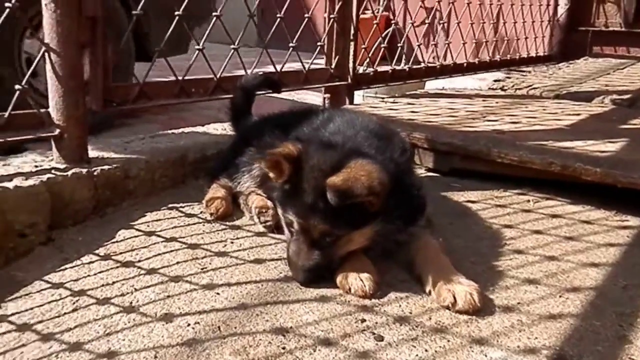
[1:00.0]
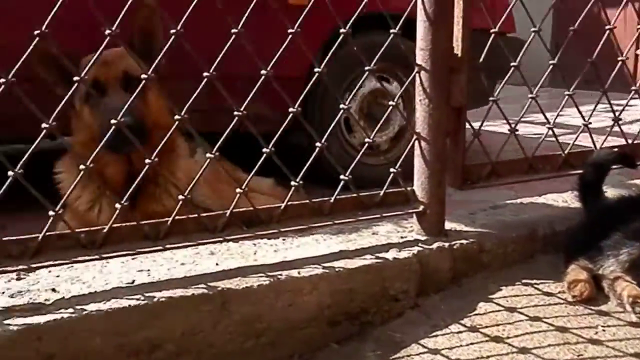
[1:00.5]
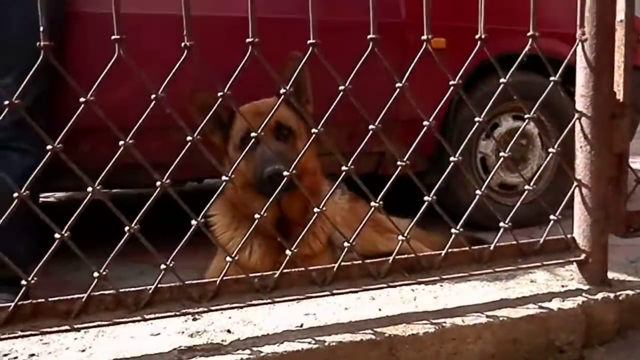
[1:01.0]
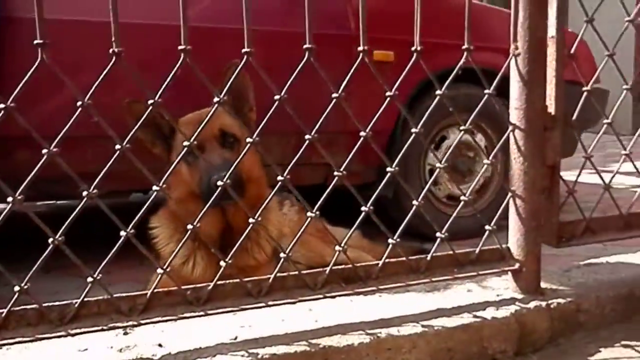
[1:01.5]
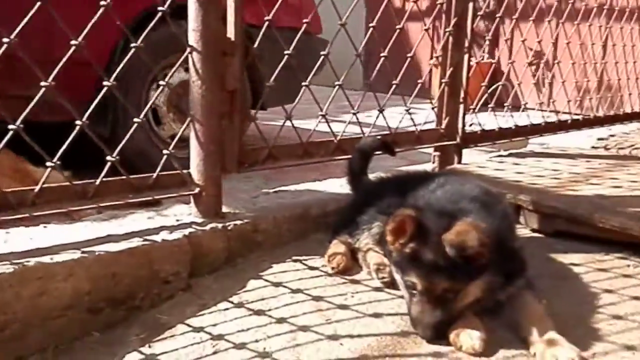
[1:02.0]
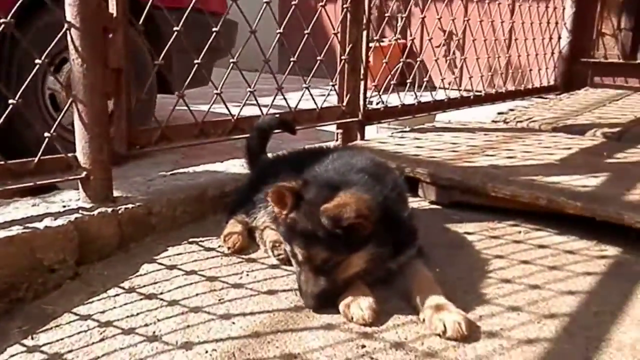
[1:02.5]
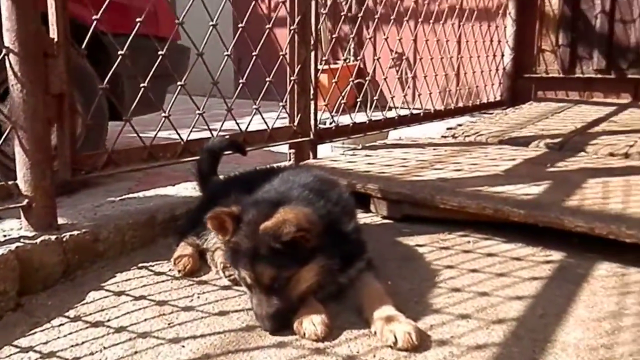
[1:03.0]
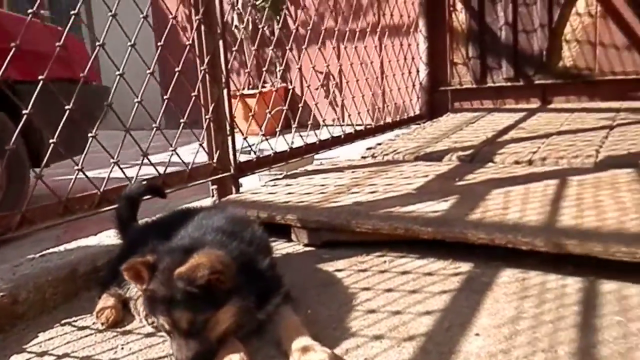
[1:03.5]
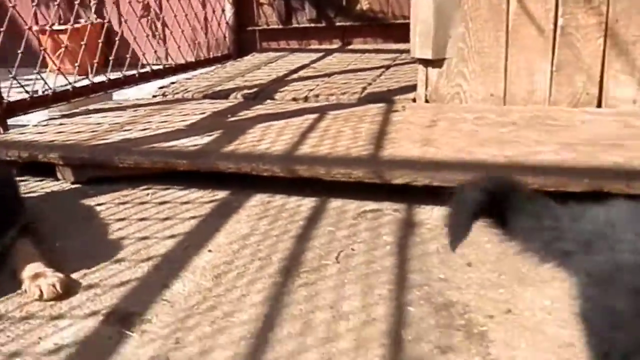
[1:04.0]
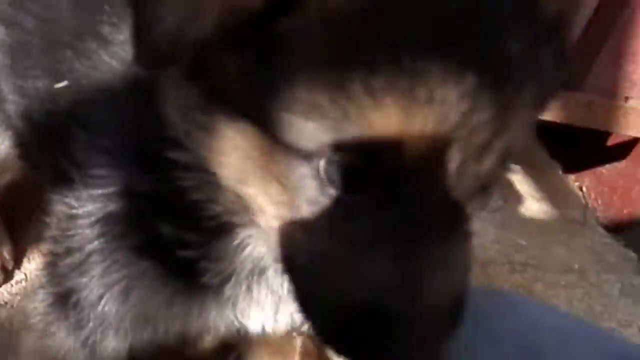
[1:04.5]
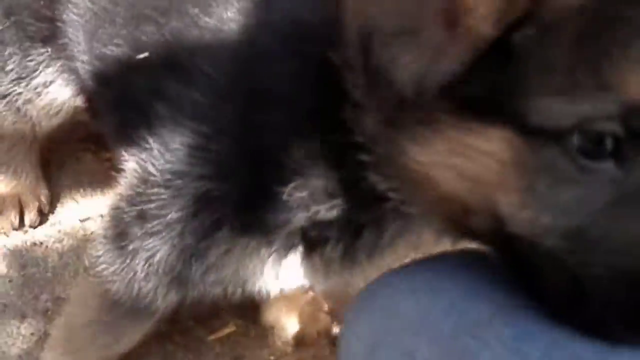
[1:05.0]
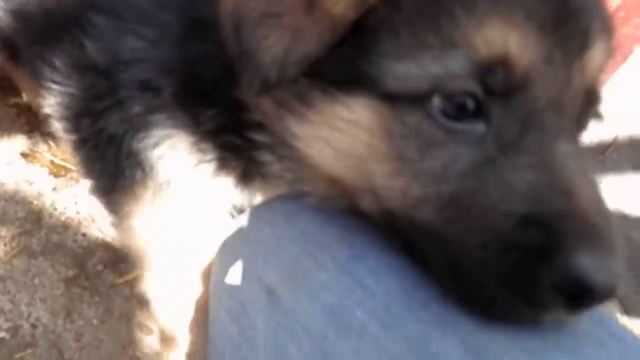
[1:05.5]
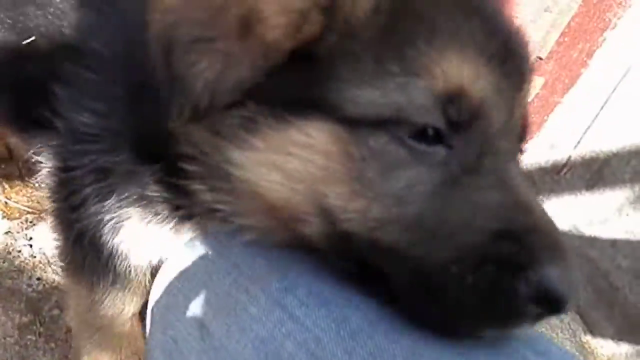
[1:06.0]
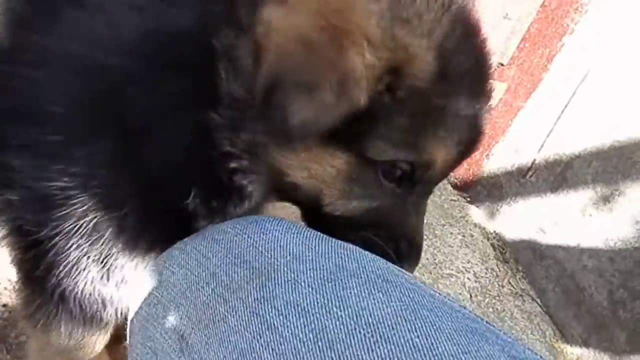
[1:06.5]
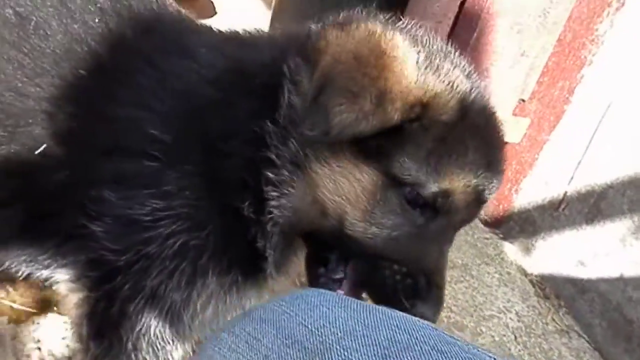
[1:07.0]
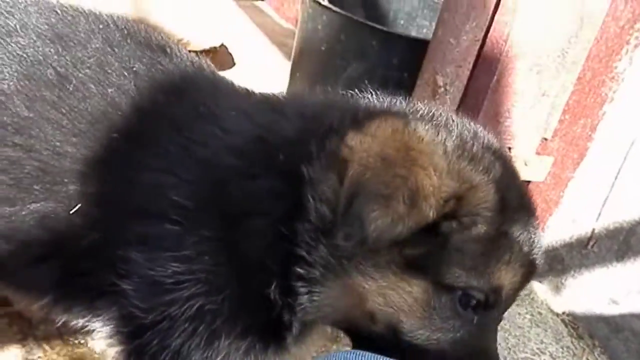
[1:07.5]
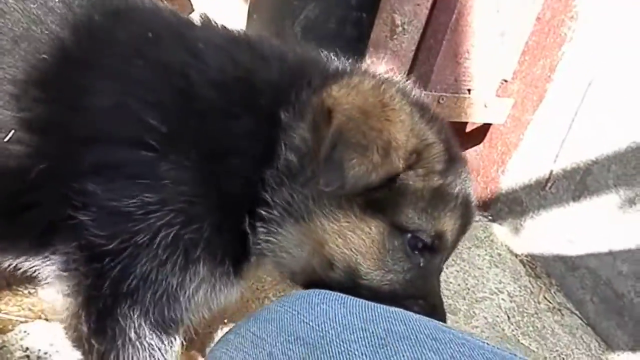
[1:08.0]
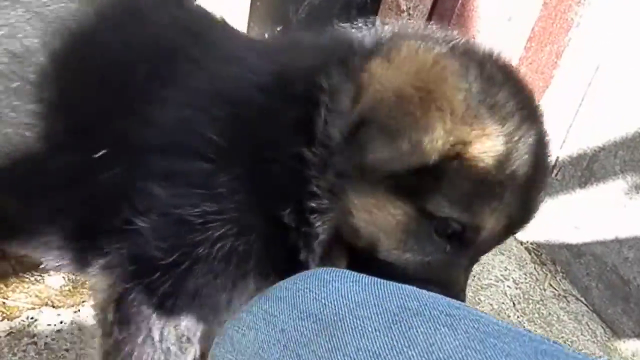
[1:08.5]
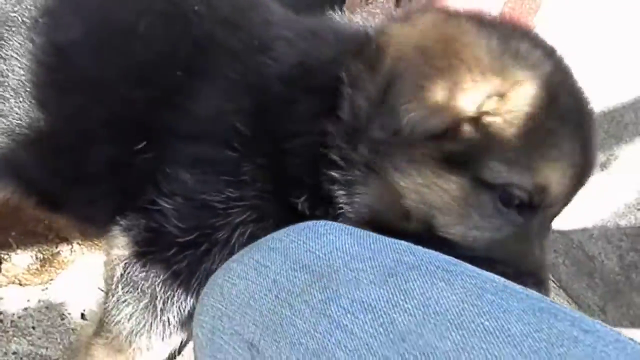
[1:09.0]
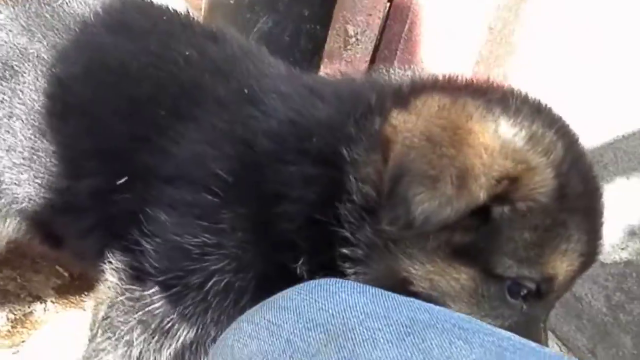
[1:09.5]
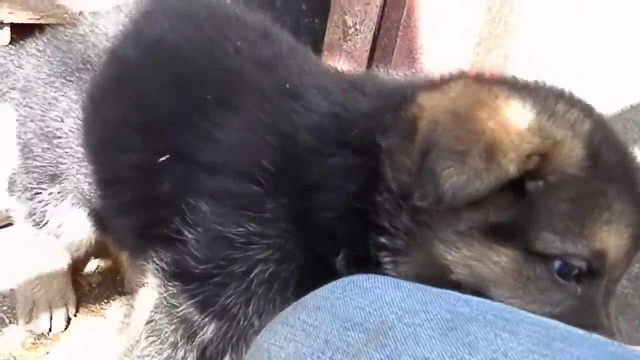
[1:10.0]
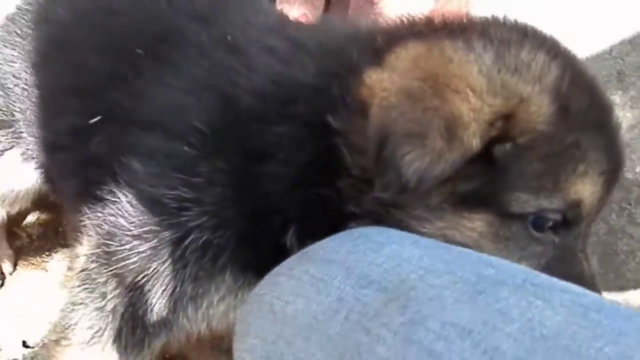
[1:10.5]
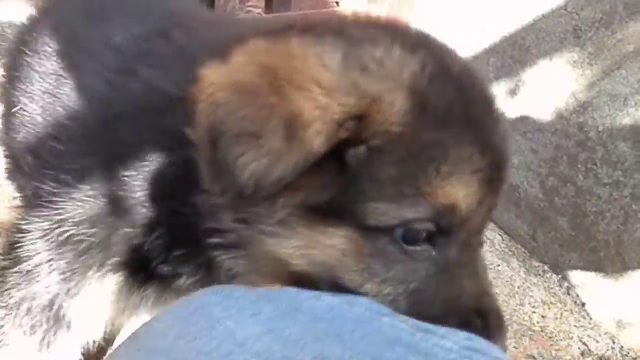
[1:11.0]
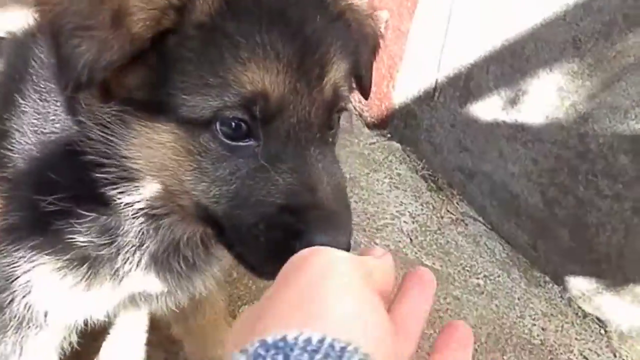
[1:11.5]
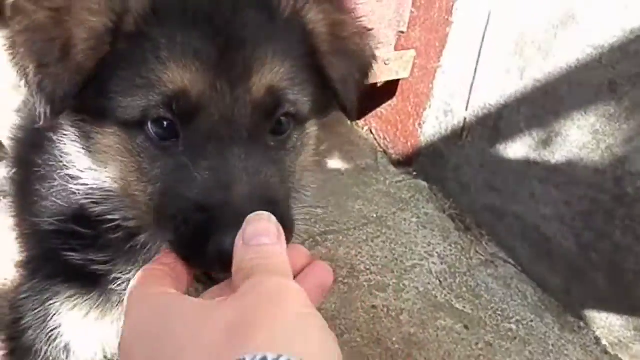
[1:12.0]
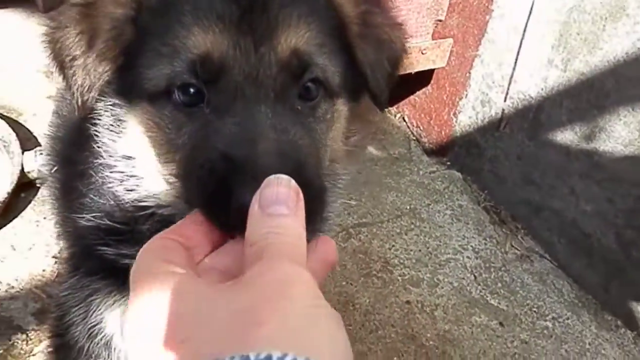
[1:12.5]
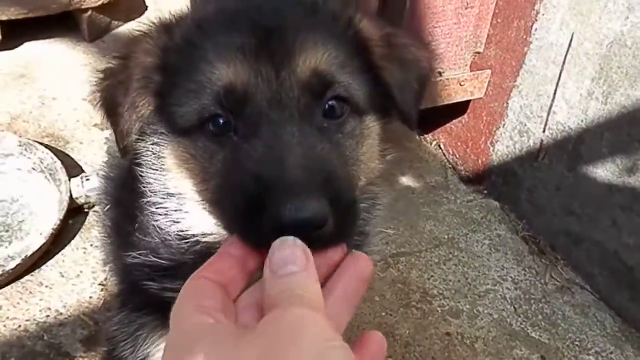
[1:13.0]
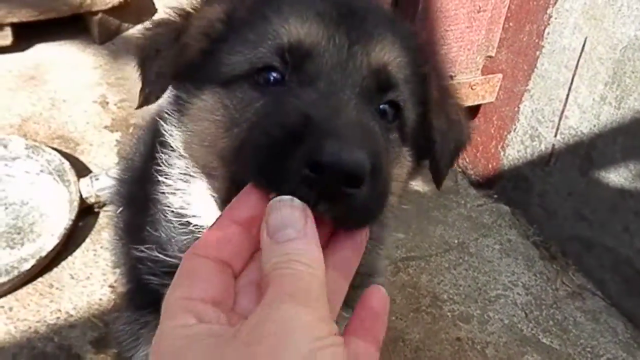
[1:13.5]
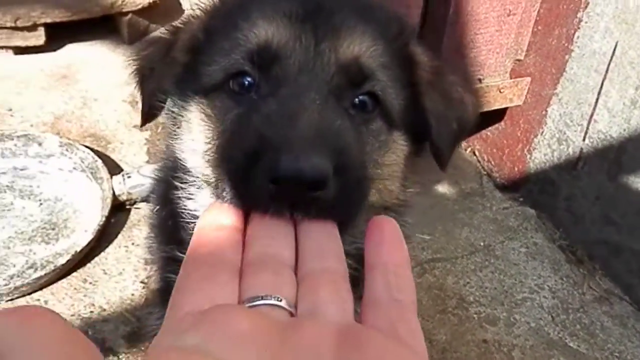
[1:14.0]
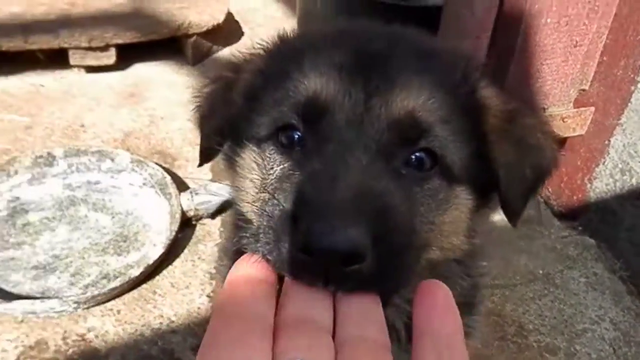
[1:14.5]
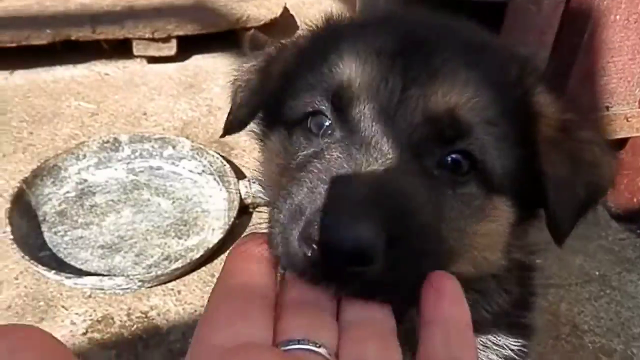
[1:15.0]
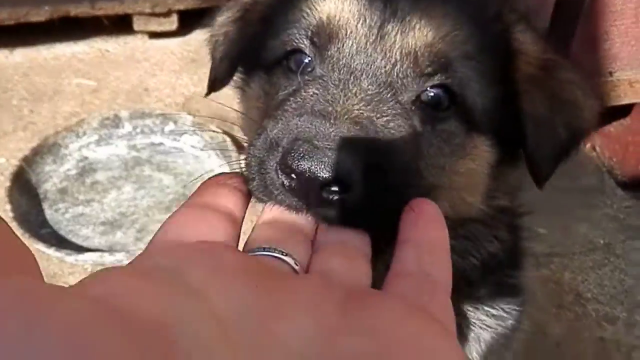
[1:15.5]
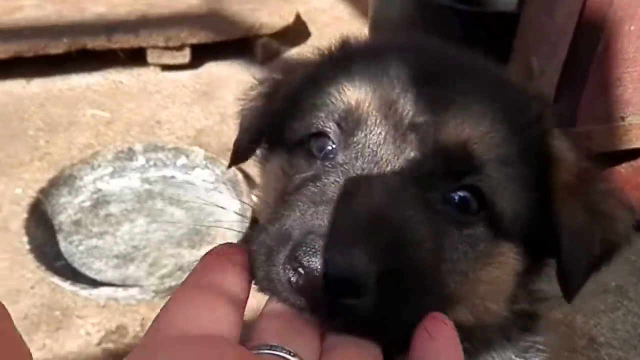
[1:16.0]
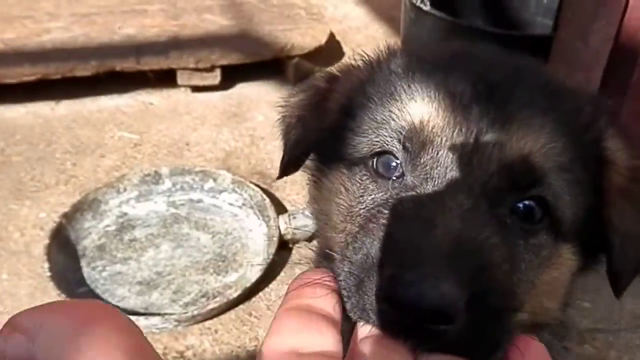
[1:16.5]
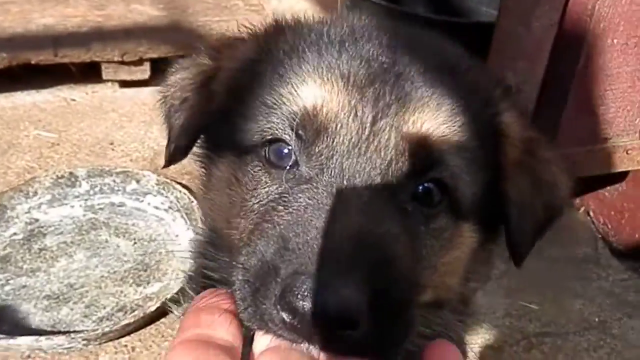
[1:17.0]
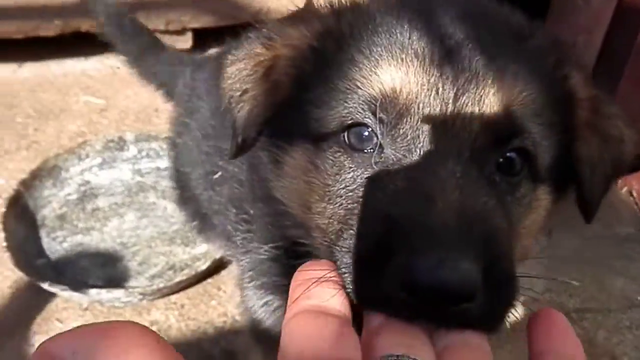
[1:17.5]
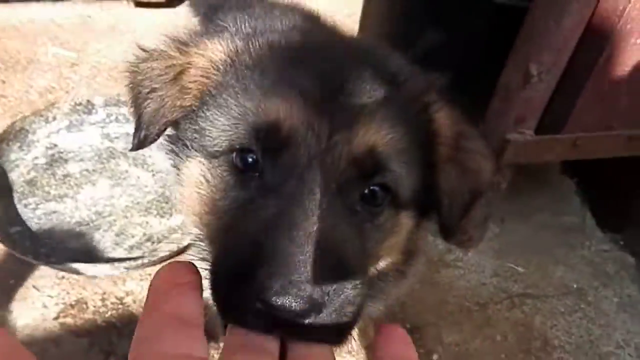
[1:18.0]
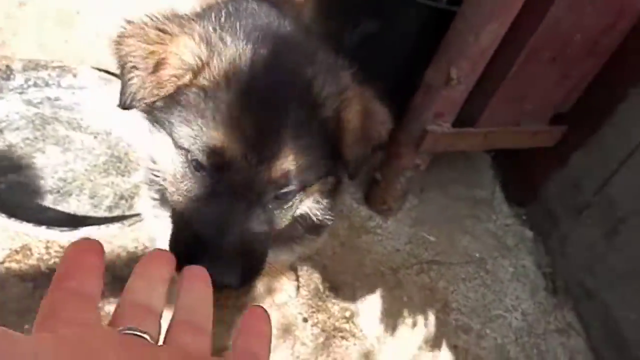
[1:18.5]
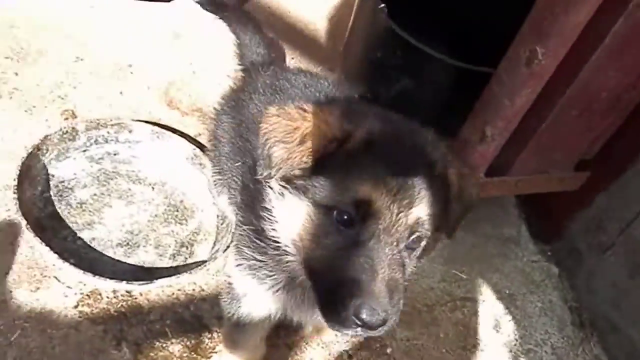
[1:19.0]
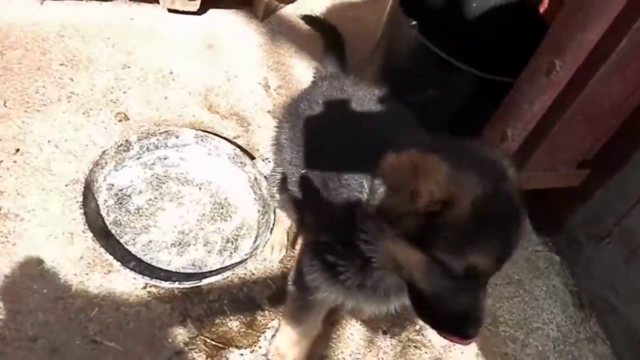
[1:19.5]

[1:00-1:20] The two dogs are still playing on the pavement while the other dog, which seems to be bigger, just stares at them. The car is still parked there. One of the dogs lies down while the other moves in the other direction, toward a person wearing navy blue jeans. The dog starts playing with the person, who puts their hand inside the dog's mouth; the dog does not bite and keeps playing with the hand while the fingers are in its mouth. On the pavement next to the person, who is sitting there in blue jeans, there is a plate that seems to be used to feed the dogs.